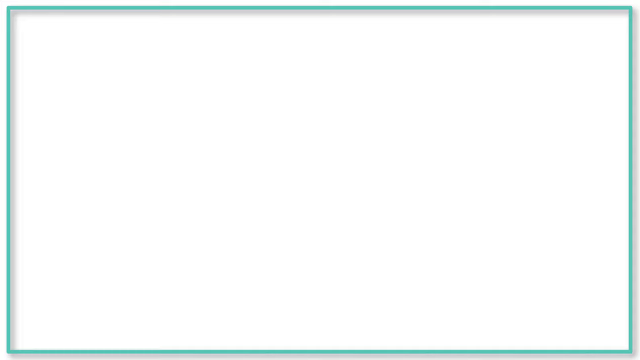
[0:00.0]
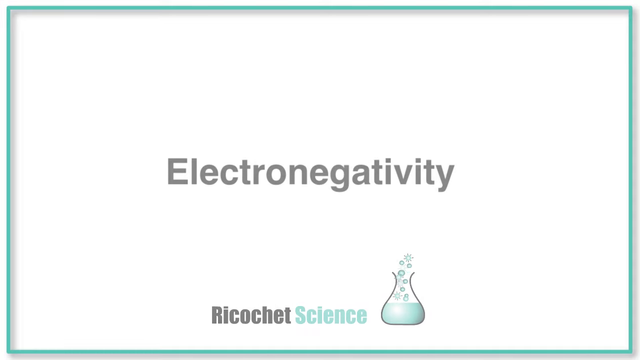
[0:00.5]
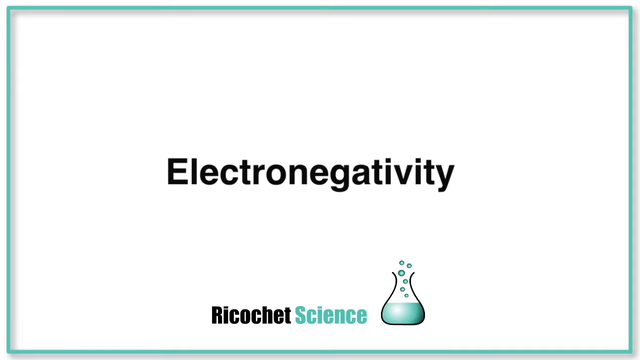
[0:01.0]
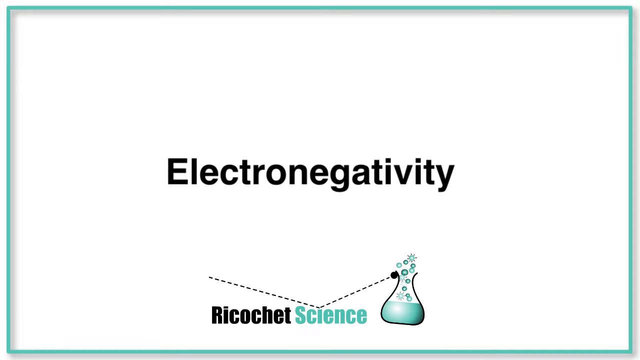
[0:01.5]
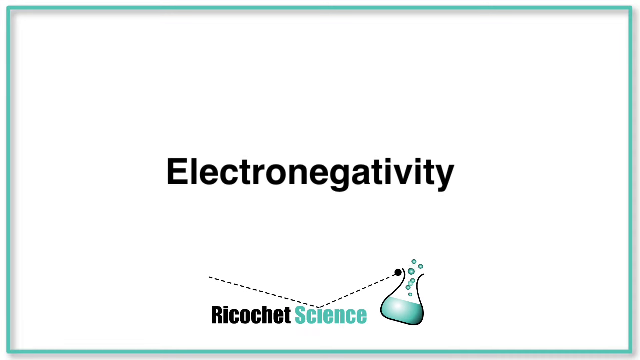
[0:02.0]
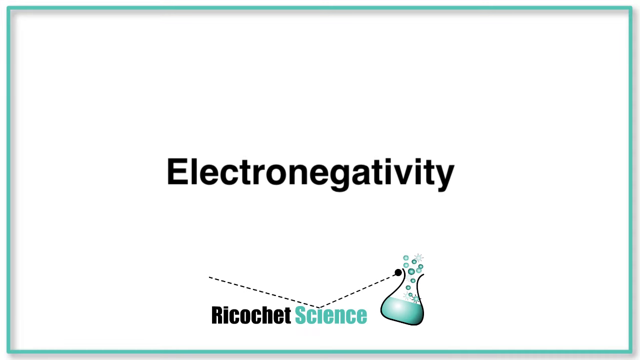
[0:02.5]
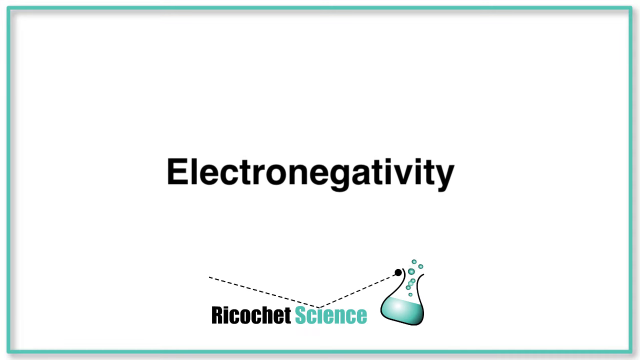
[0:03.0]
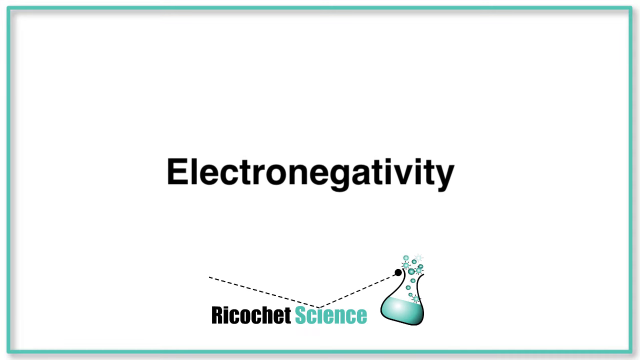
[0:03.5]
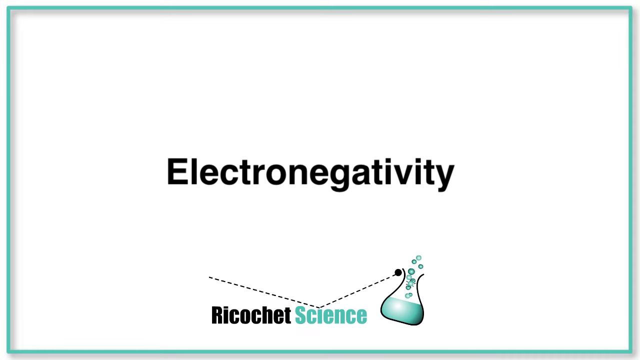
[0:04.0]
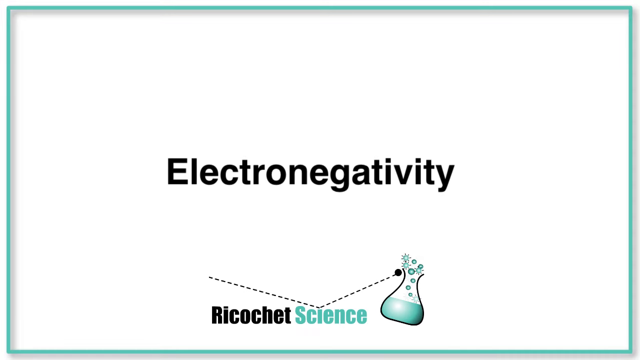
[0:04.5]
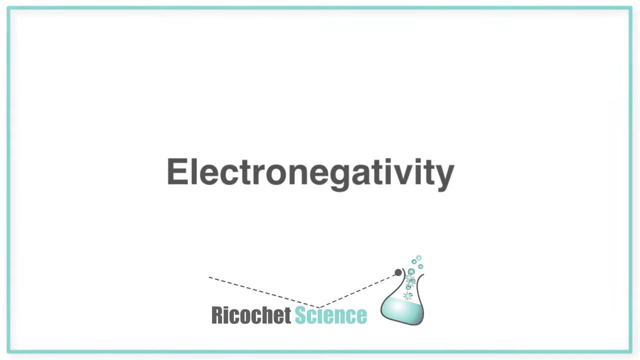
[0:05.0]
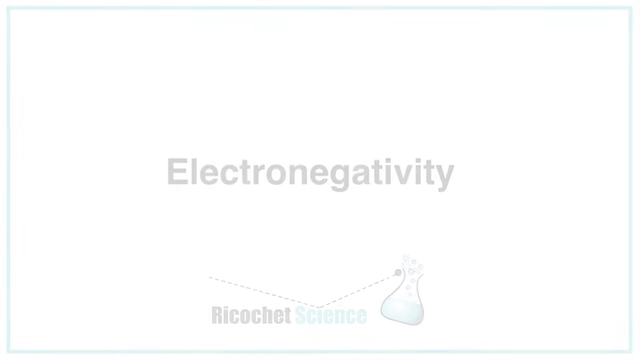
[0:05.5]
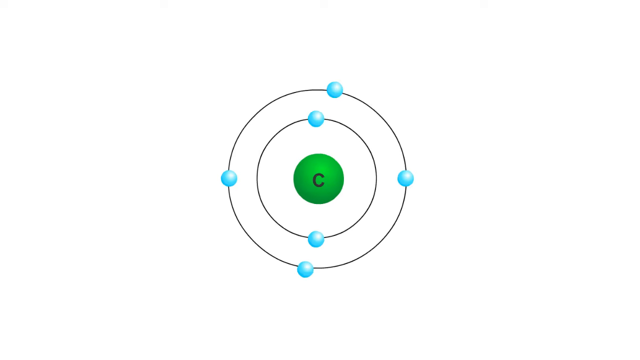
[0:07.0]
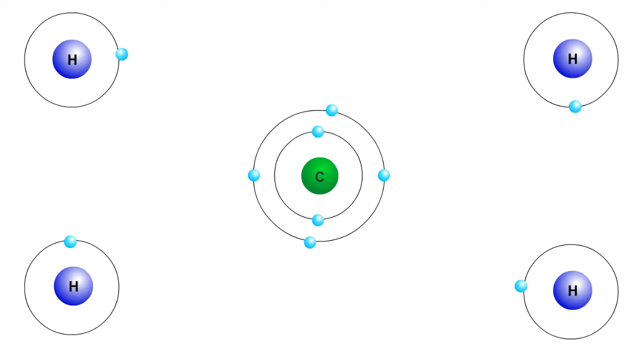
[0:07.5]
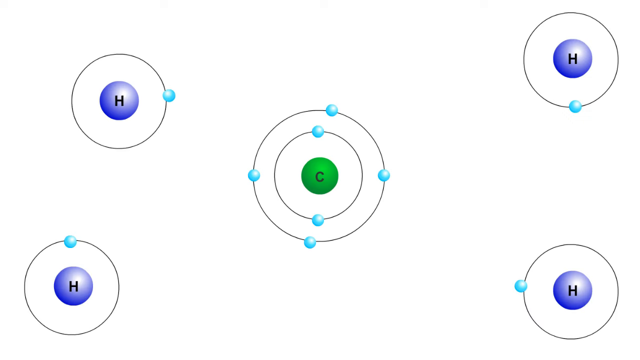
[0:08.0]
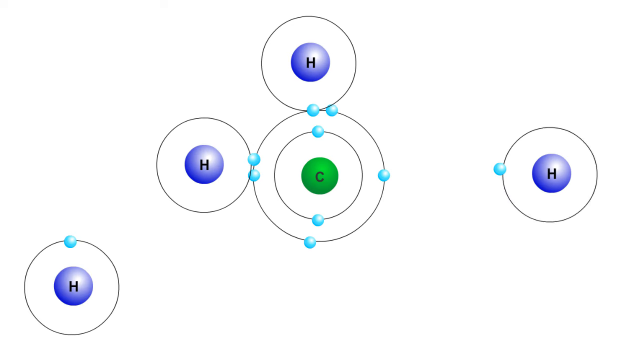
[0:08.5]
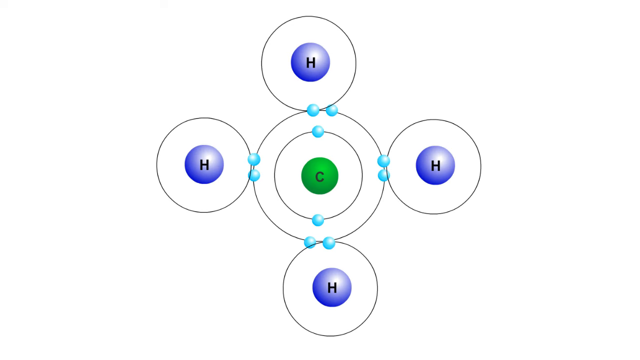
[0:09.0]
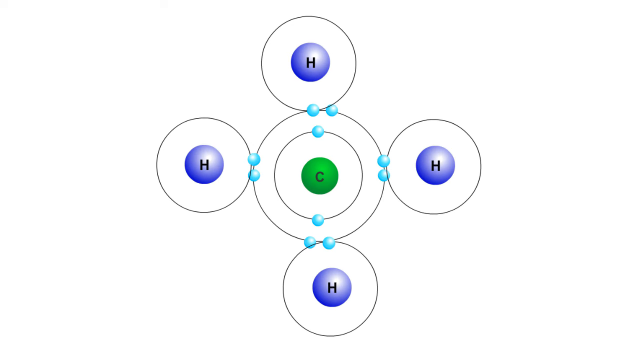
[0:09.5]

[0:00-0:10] On a white background, the word "electronegativity" appears in the very middle of the screen, quite large. Across the bottom of the screen is a logo: "ricochet" in black next to the word "science" in light blue, with a stylized icon of a beaker about a third full of liquid with bubbles coming out of it, drawn in something like a pixel-art icon style. A ball followed by a dotted line appears above the word "ricochet", above the R, and moves downward trailing a straight dotted line. It appears to collide with the letter I, then bounces upward at an angle, still trailing a dotted line and forming a dotted V, hits the beaker icon and knocks it off kilter. That fades out, and a picture of spheres appears: in the middle is a green one marked C for carbon, and around it are four purple ones marked H for hydrogen. The carbon has black circles around it with blue spheres on them. Each hydrogen has a single black circle with a single blue sphere, probably indicating electrons. The hydrogens move toward the carbon, their circles connect to the carbon's, and they stick to it, indicating molecular bonds.